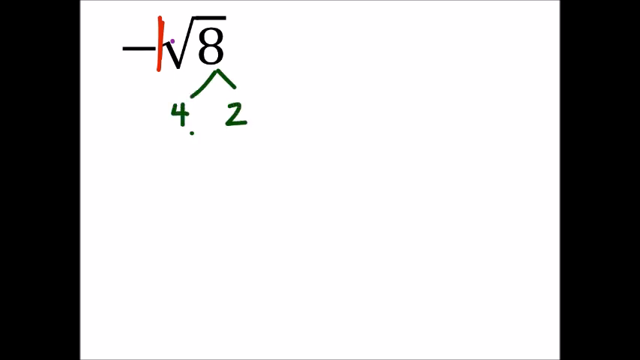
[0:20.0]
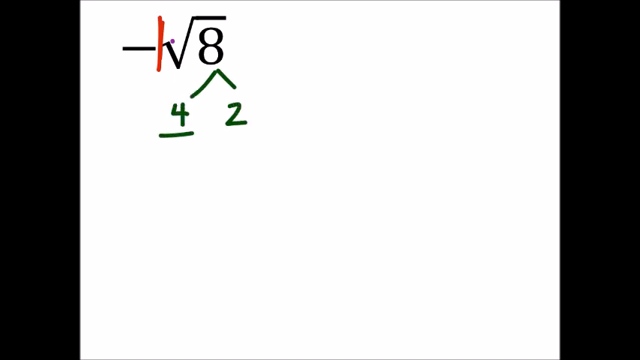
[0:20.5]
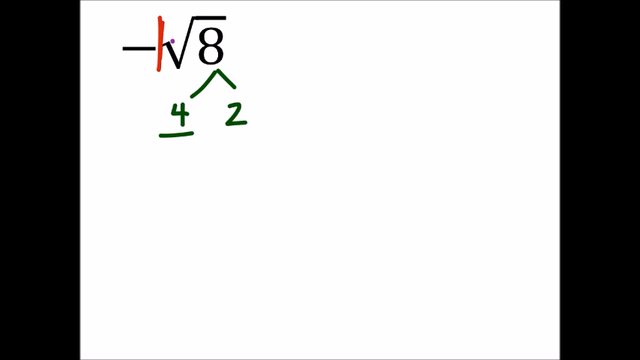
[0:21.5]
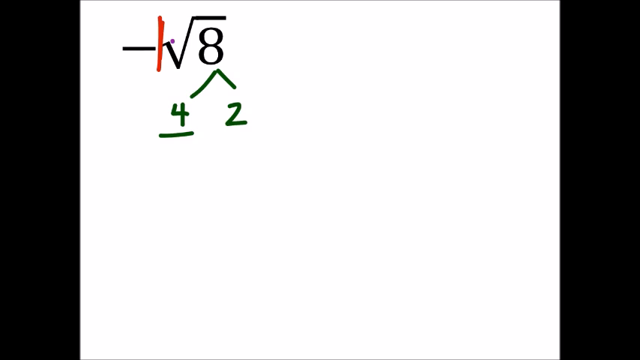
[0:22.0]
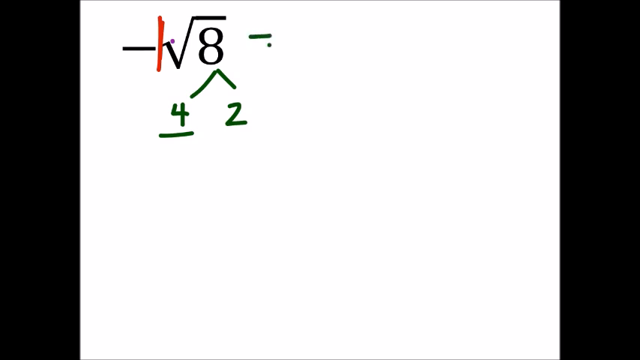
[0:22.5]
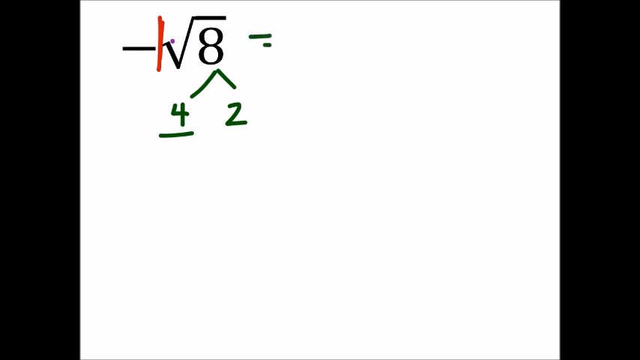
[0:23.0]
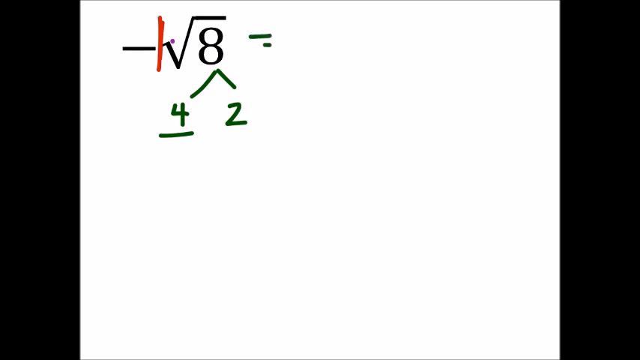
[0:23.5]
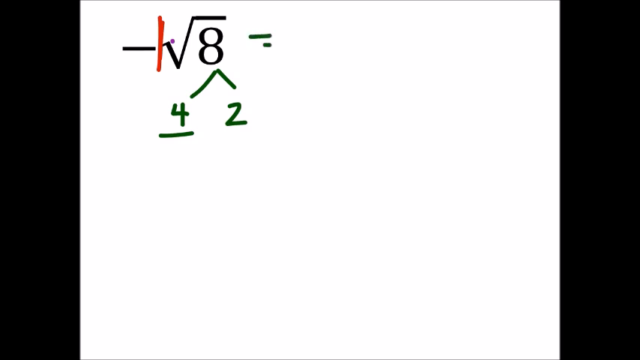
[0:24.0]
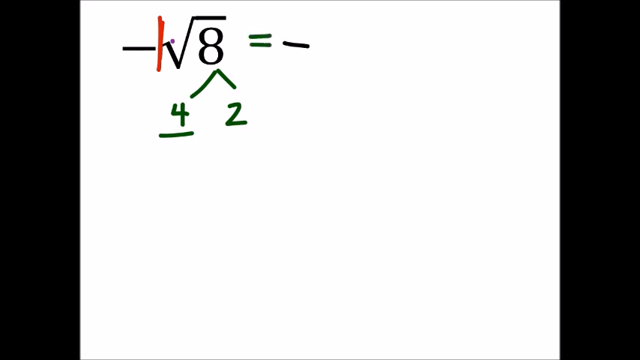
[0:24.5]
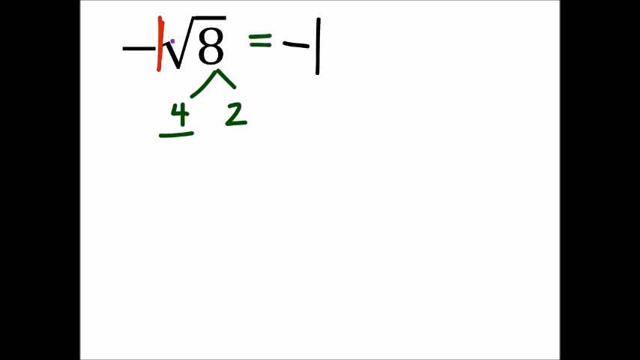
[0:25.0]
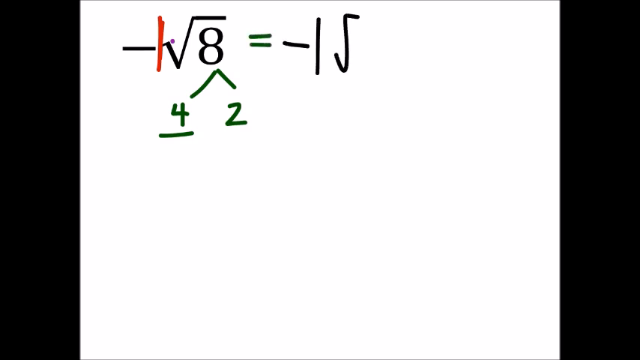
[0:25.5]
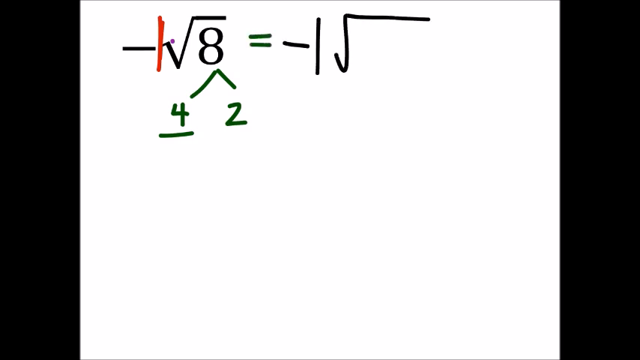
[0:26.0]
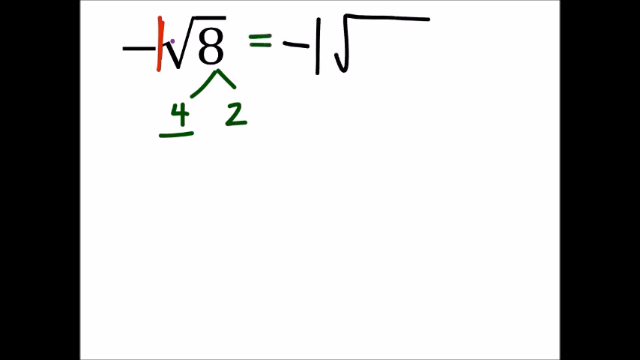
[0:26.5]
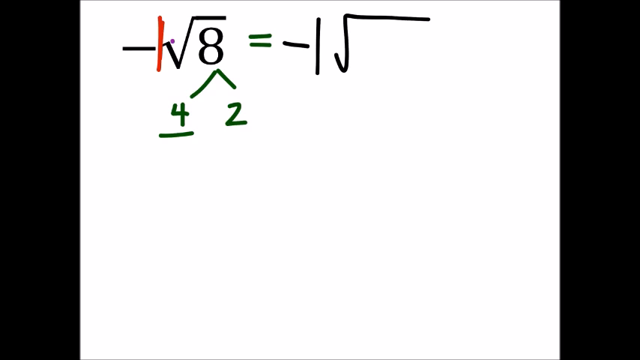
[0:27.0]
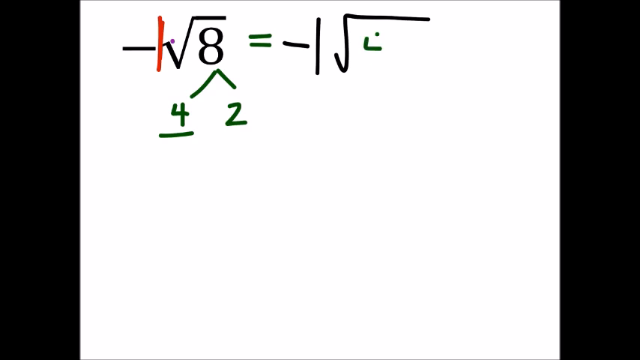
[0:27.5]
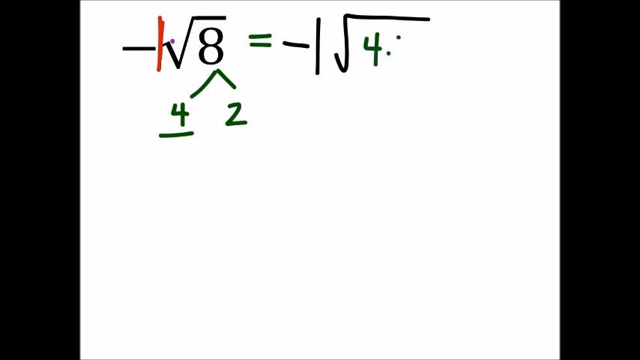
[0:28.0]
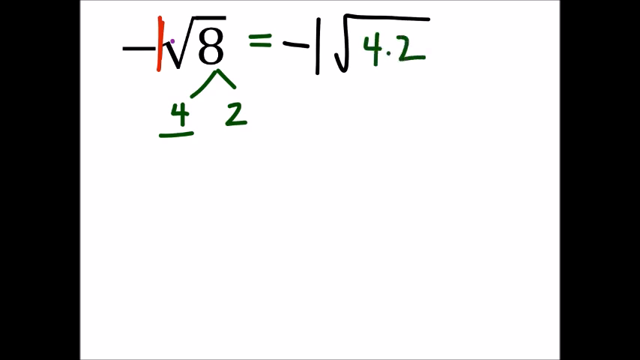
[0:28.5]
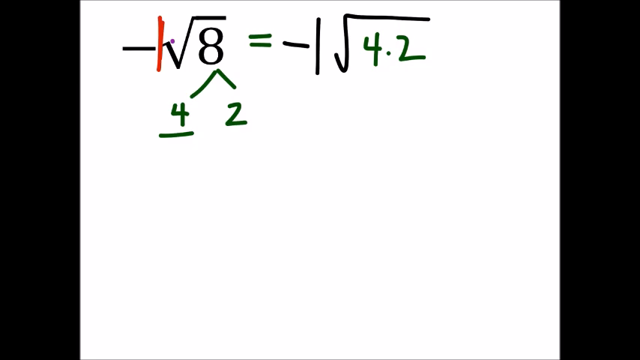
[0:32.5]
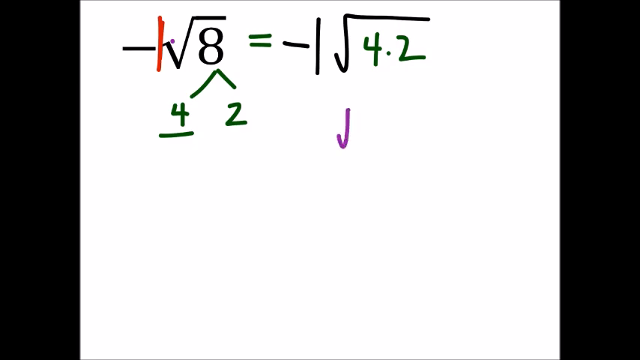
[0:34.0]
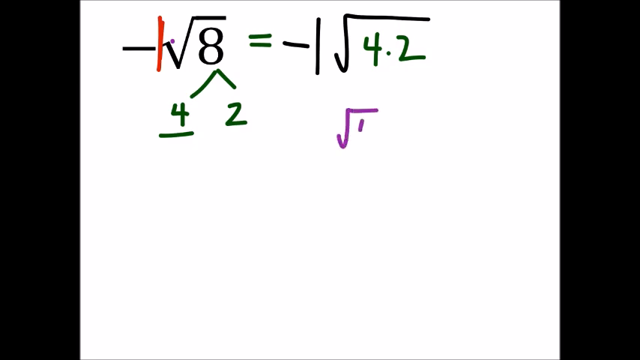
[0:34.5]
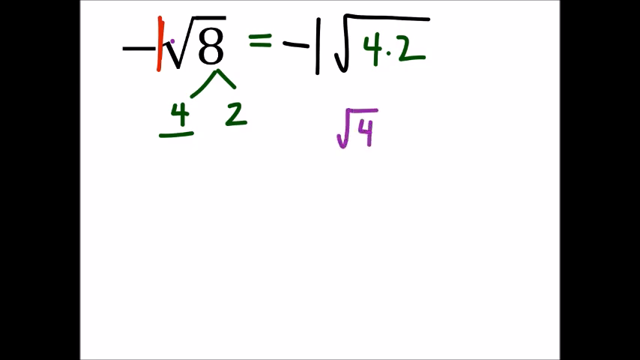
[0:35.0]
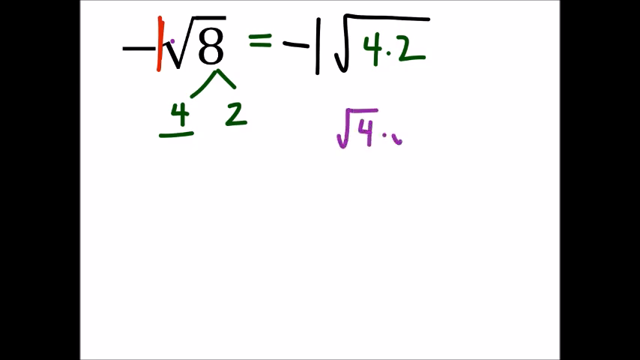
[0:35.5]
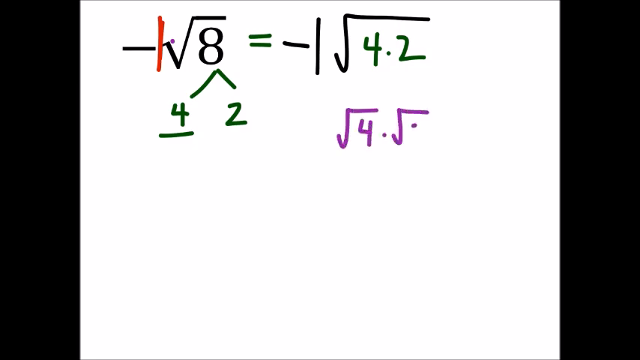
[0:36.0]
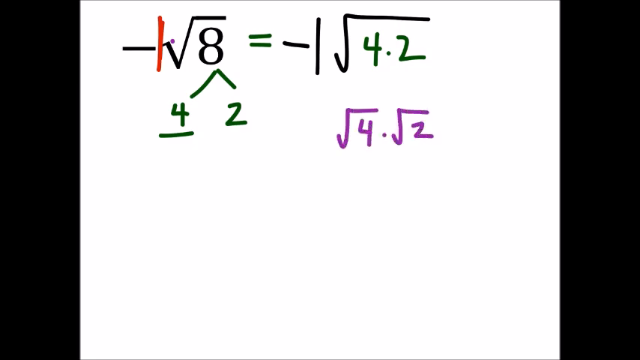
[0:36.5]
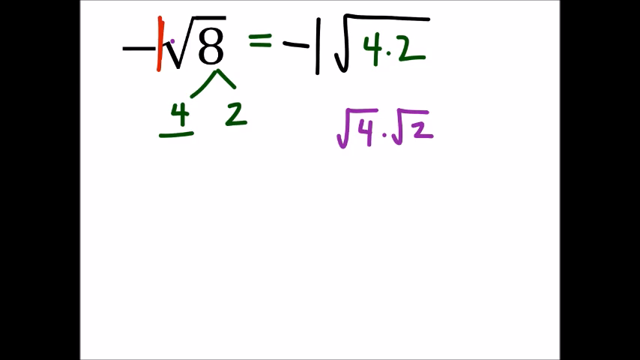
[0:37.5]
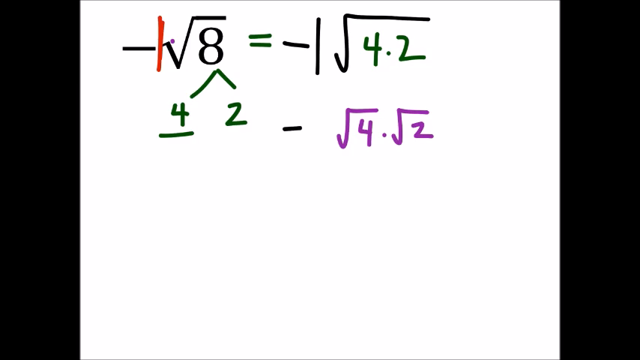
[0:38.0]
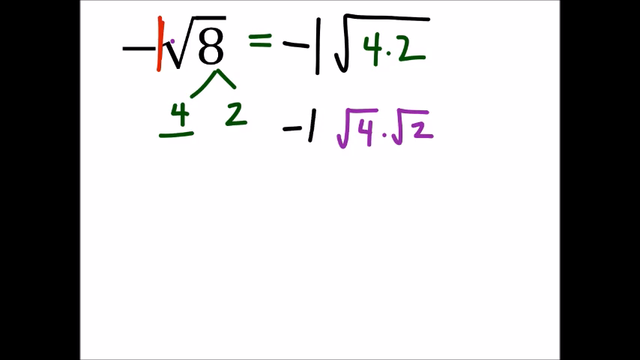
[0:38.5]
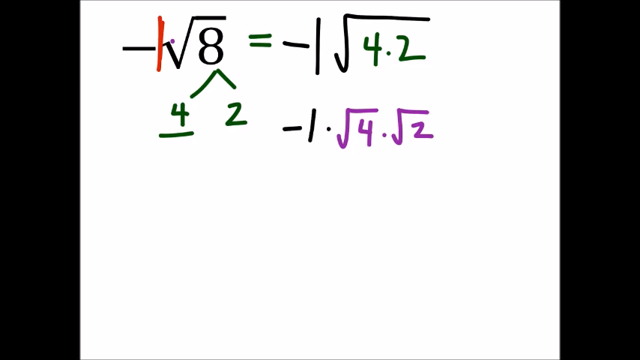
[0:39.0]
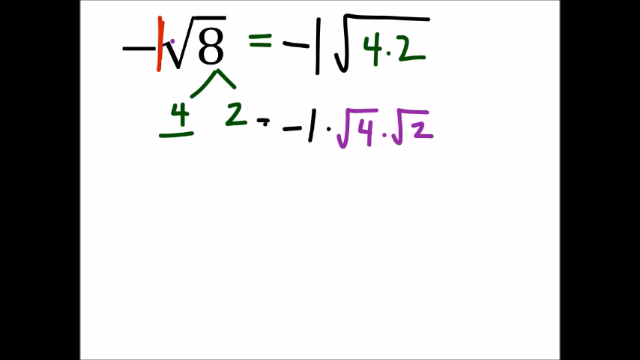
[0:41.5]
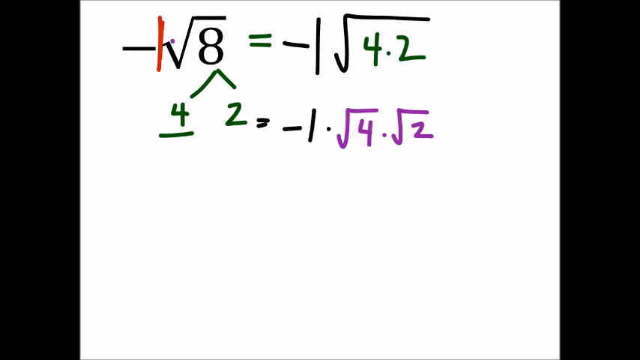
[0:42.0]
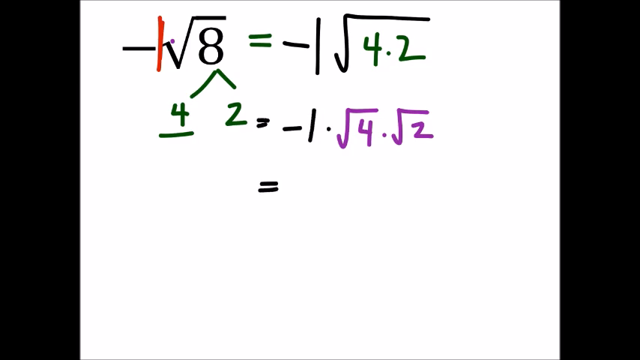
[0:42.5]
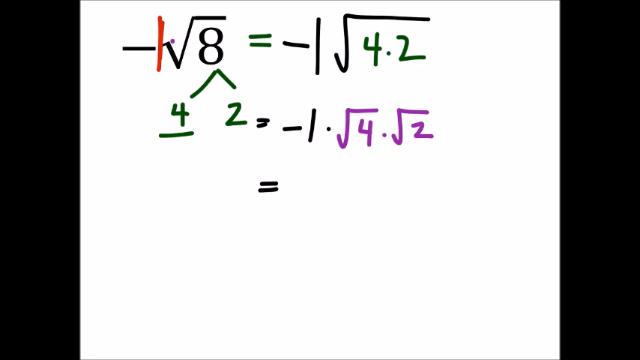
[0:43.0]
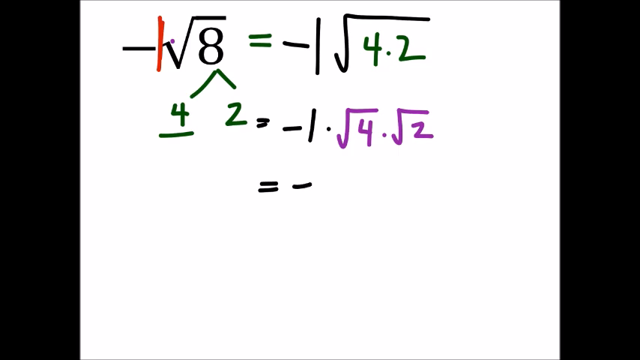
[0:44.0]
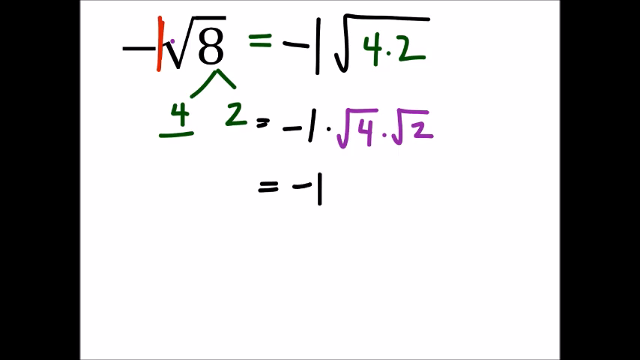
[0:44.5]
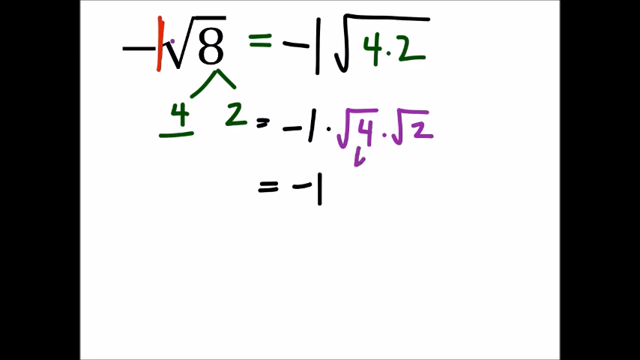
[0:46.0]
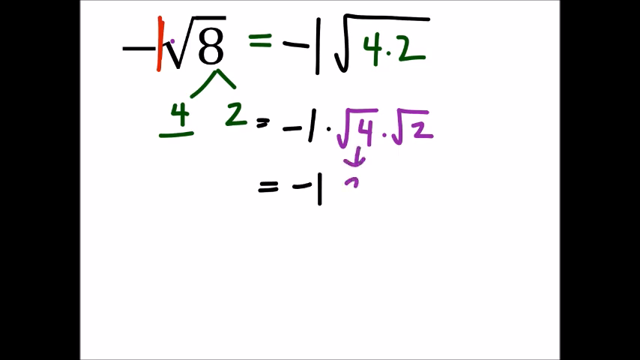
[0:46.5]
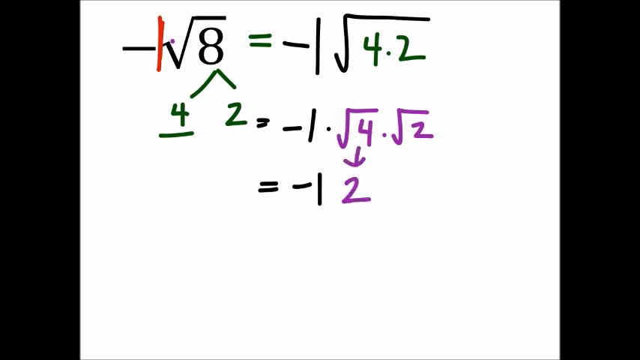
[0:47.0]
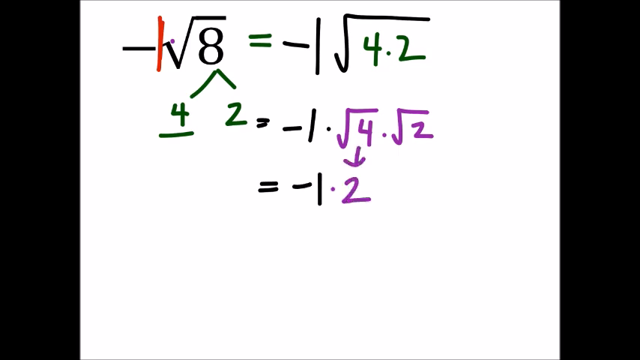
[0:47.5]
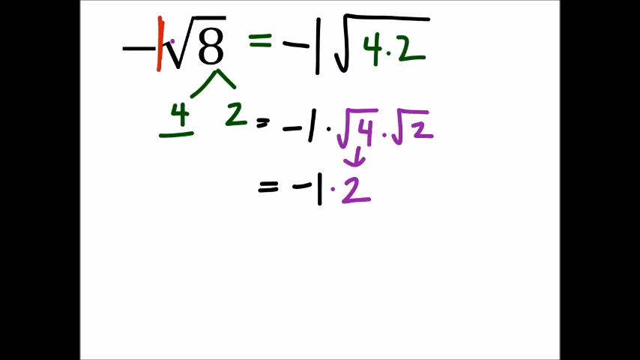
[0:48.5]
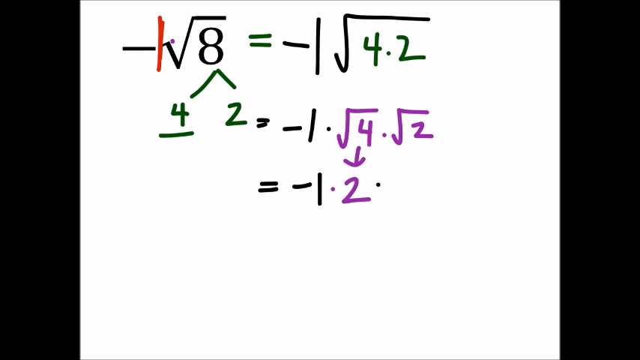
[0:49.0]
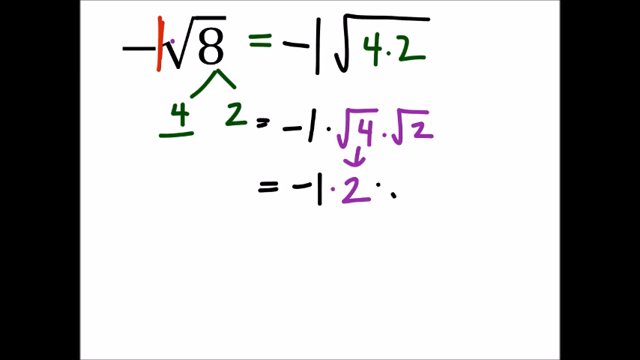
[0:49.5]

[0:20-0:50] A maths problem shows a negative square root of 8. In between the negative symbol and the square root is a red scribble, or a red line written with a marker. Underneath the 8 are two lines pointing at an angle, written in green marker; the left line has the number 4 under it and the right line has the number 2 under it. A dot underneath the number 4 eventually turns into a line. The person writes a line next to the 8 on the right-hand side in the same green koki pen, then writes another line on top of it, making an equals sign. They write negative 1, square root of 4.2; the negative 1 and the square root are in black and the 4.2 is in green. Underneath that are two more square roots written in purple: square root of 4 and square root of 2. They then write negative 1 on the left-hand side of the square root of 4. Underneath that is an equals sign, then negative 1 in black. Under the square root of 4 they draw an arrow pointing down, with the number 2 under it.